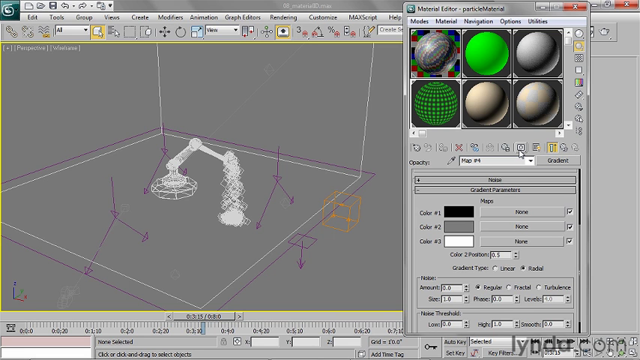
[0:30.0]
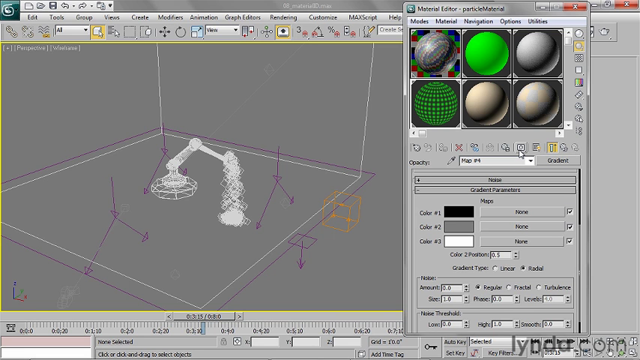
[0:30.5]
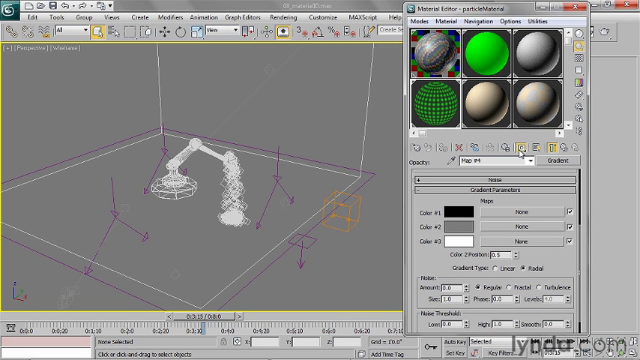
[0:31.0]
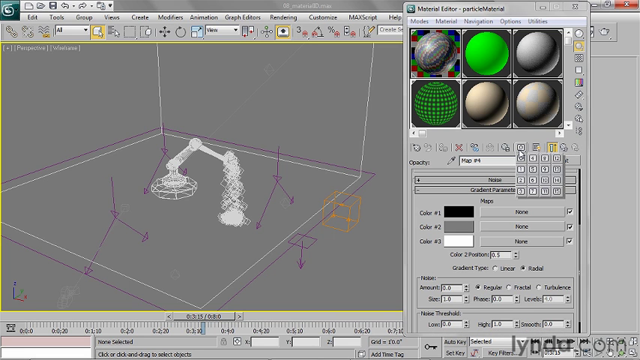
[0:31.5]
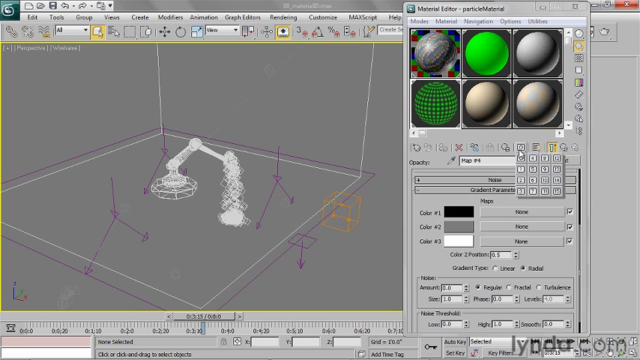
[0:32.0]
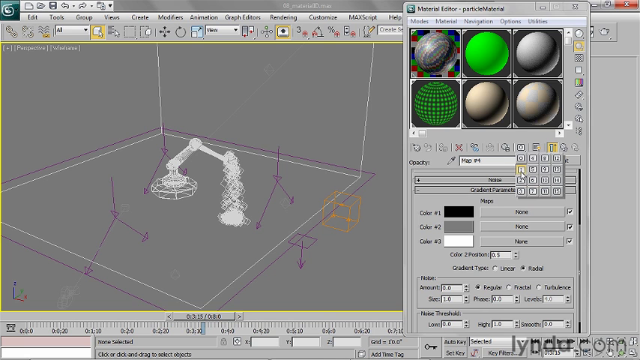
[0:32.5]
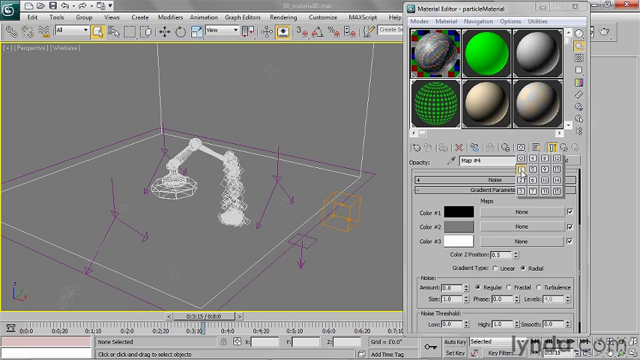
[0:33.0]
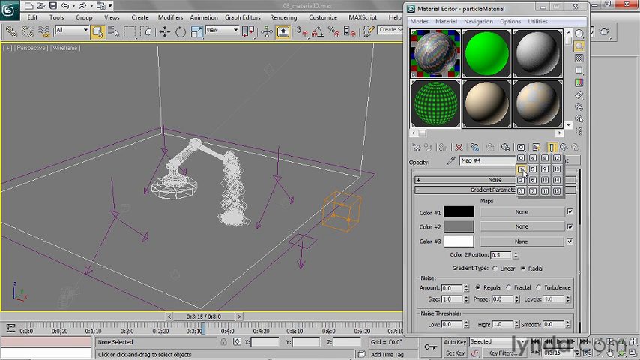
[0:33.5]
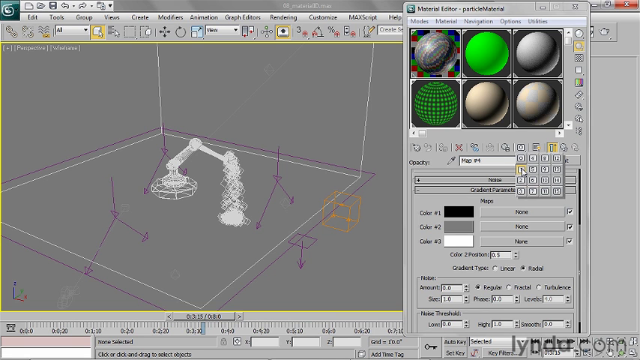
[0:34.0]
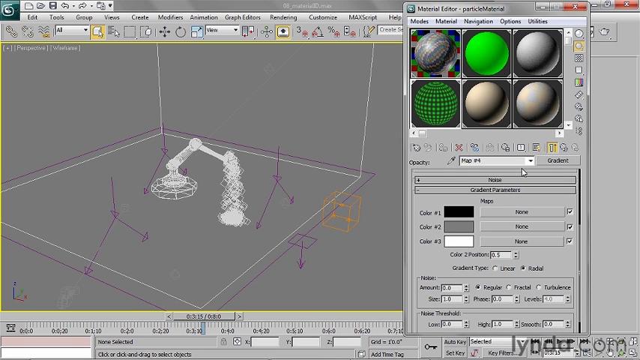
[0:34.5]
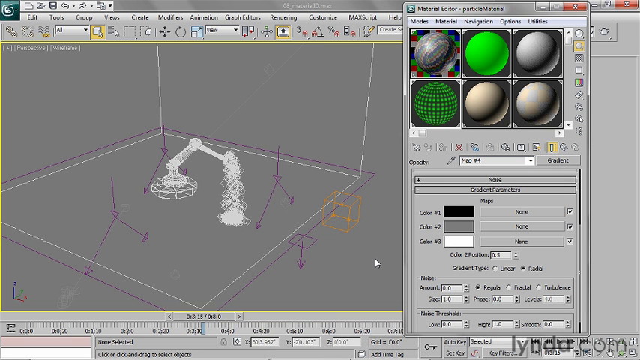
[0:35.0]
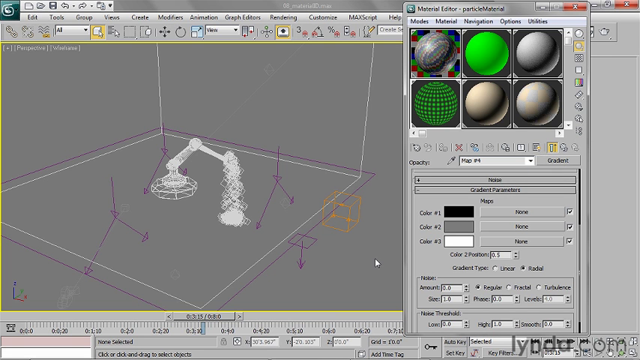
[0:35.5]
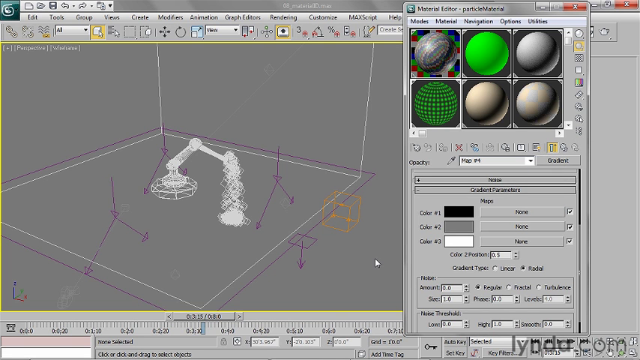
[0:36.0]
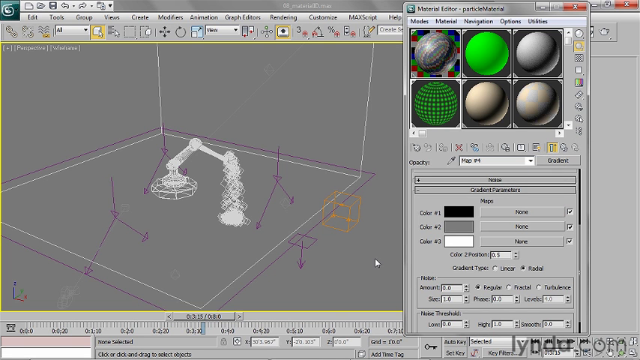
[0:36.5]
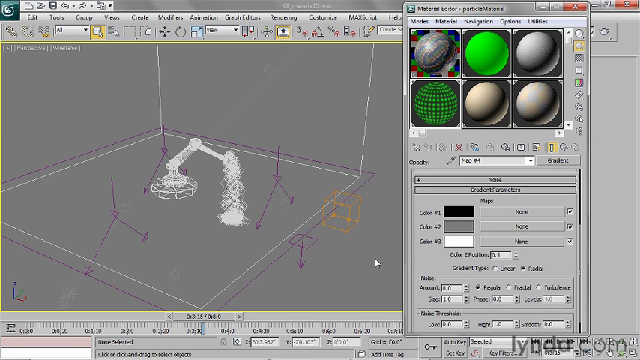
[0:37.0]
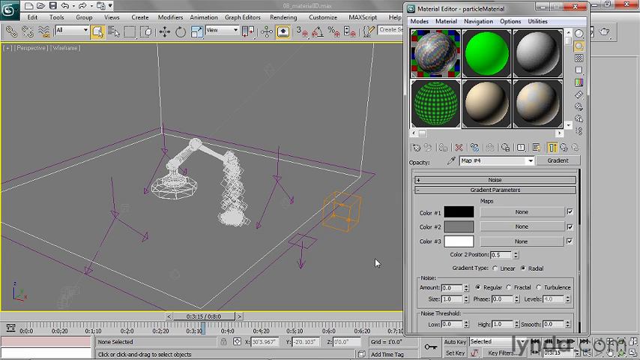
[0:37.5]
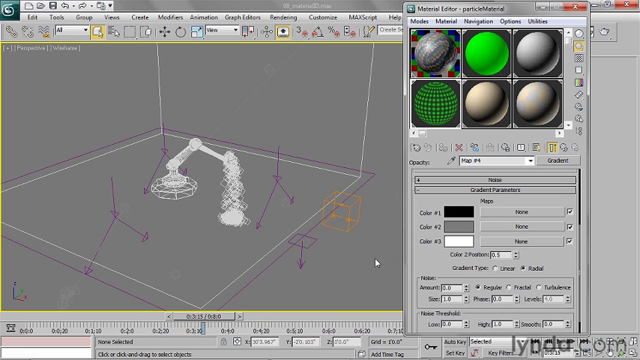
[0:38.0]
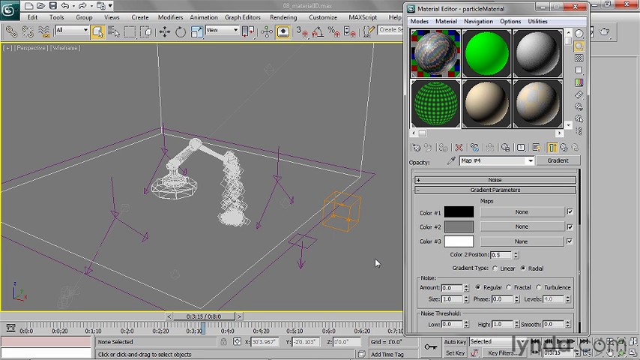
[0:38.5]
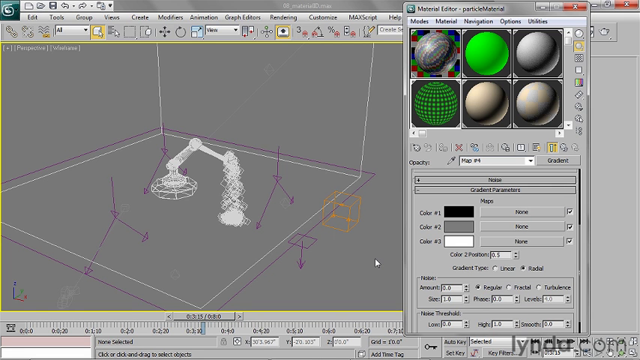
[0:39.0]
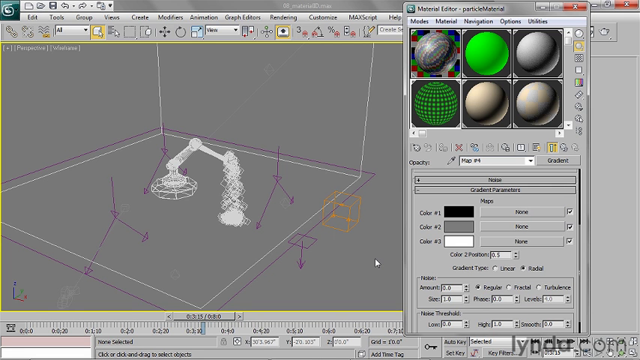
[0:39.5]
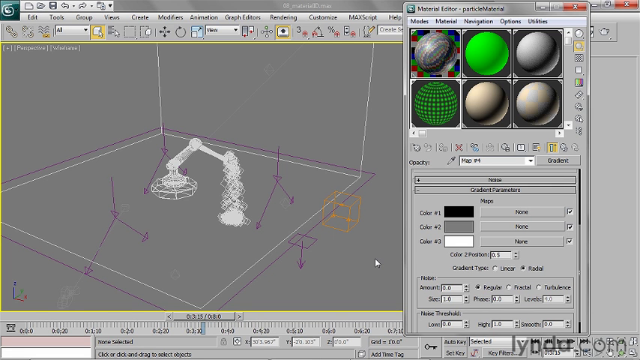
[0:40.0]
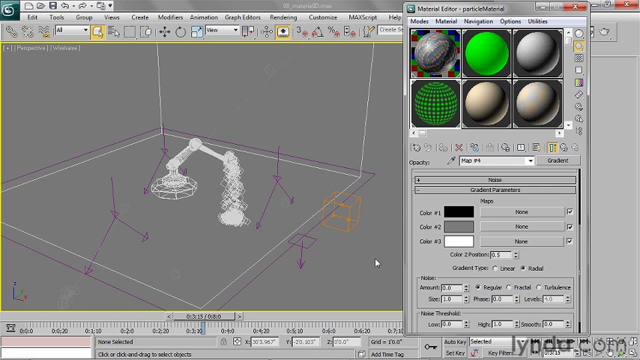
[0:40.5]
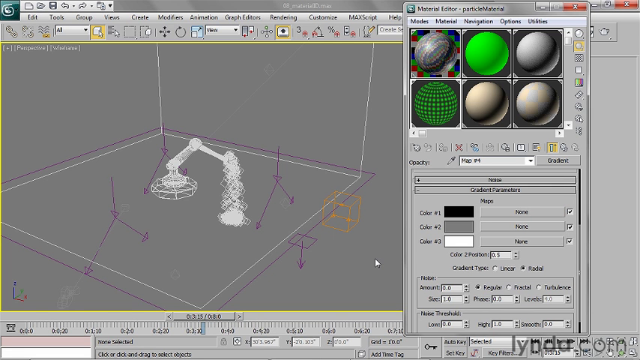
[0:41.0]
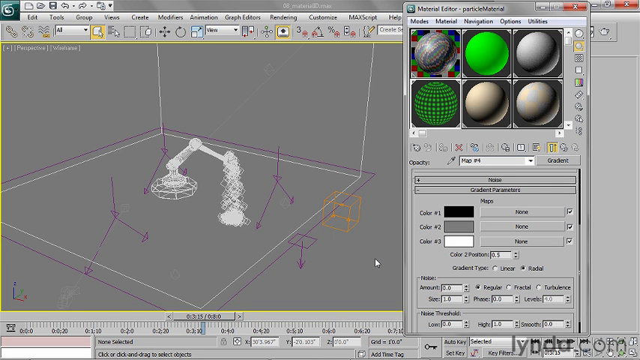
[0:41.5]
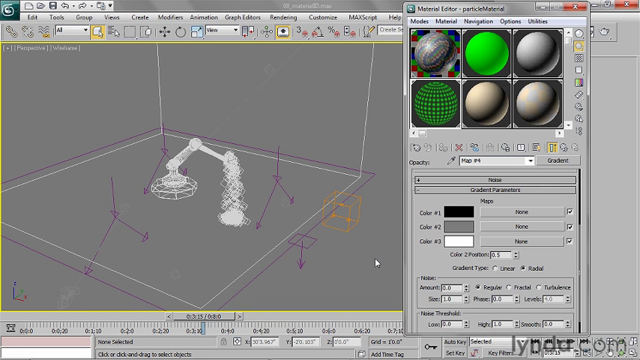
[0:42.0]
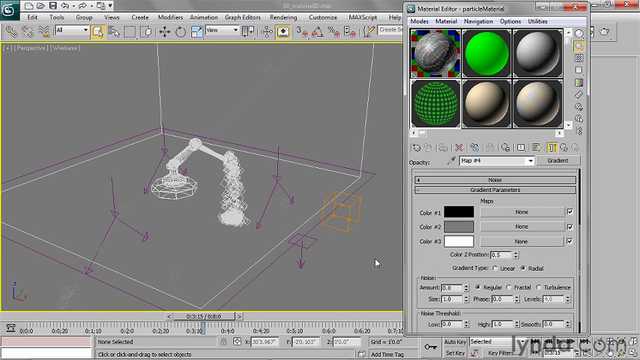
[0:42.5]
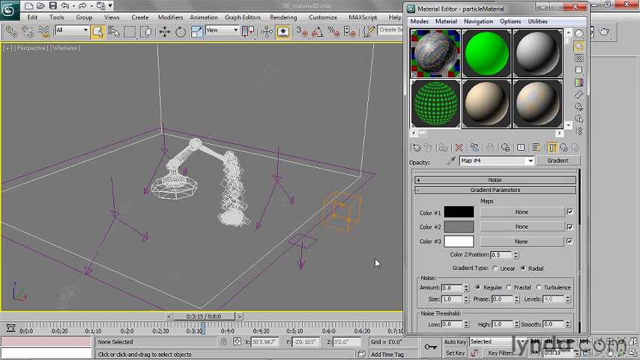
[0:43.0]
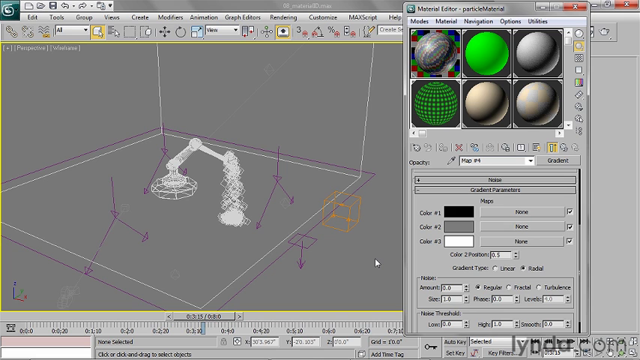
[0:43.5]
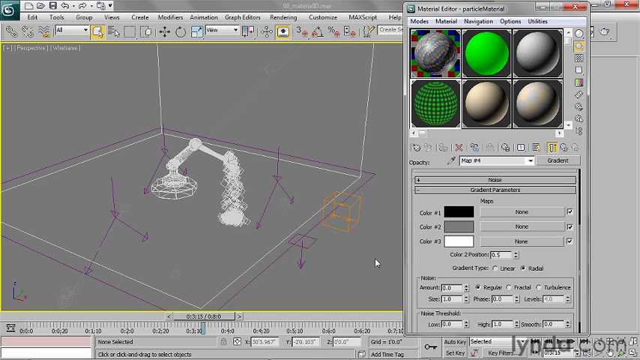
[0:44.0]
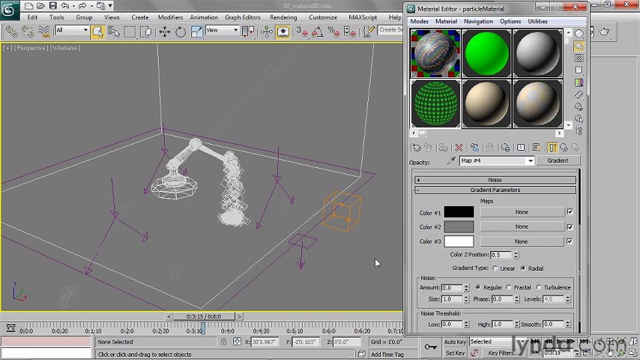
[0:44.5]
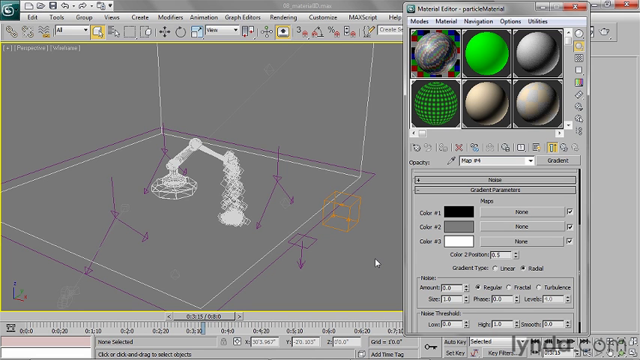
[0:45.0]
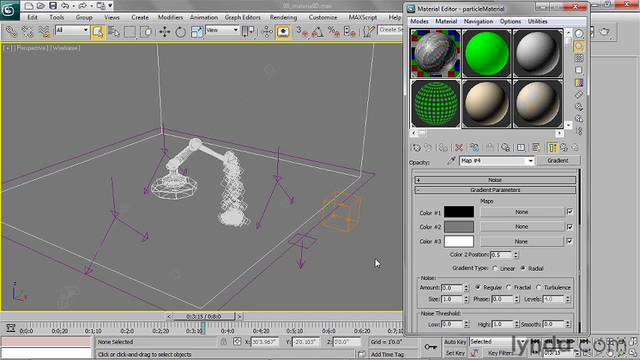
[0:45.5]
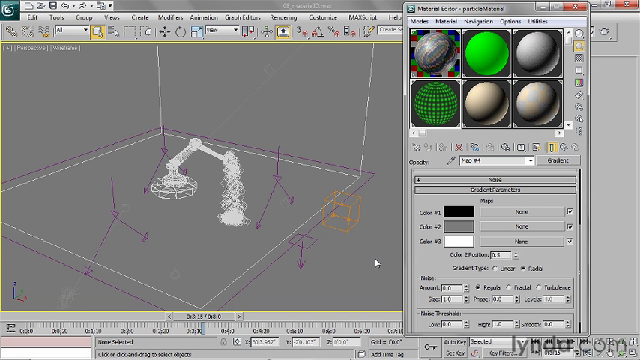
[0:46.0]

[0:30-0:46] With the materials already selected, the cursor pushes one of the buttons right below the spheres, second to the end, which brings up a drop-down array of options, and it clicks one of them. The spheres include one that looks like a granite sphere with some visual texture but very smooth, a green sphere that looks like artwork, one that looks like it is illuminated only from one side, and one that looks green, projecting little skinny pyramids from the center that show the representation of a sphere. After selecting from the options, the cursor moves back to the middle of the screen and just sits there.